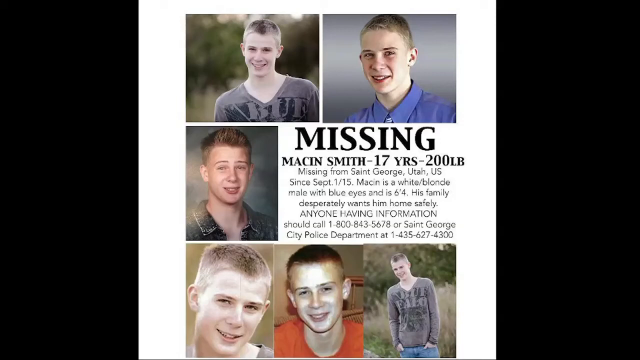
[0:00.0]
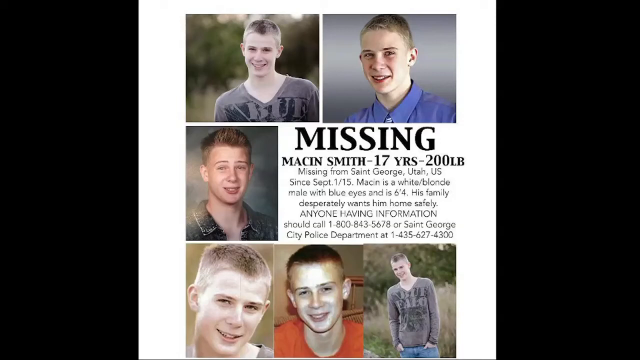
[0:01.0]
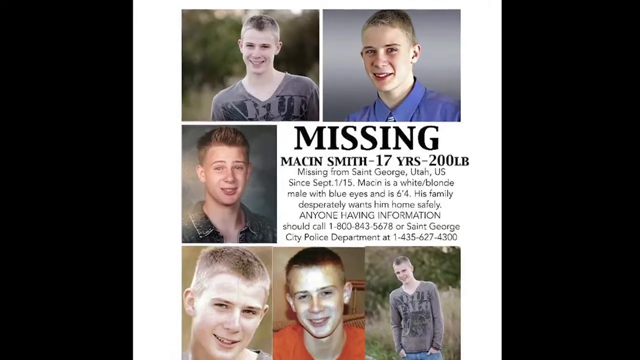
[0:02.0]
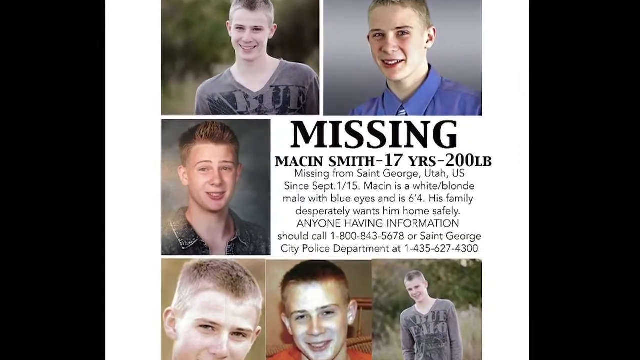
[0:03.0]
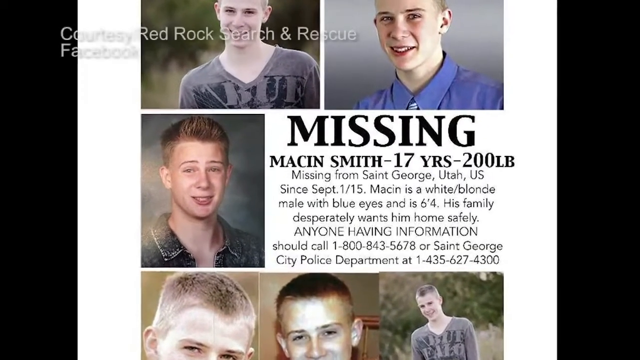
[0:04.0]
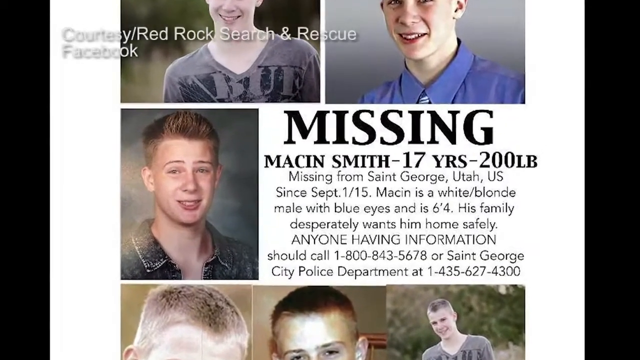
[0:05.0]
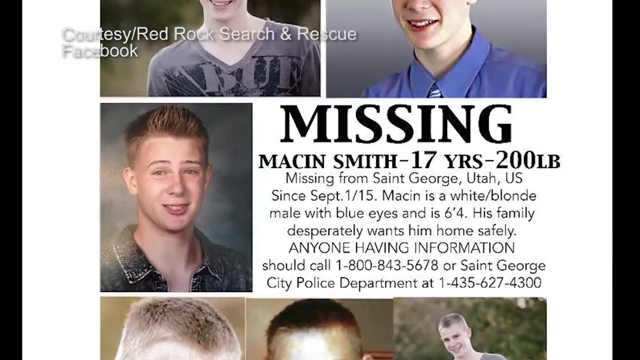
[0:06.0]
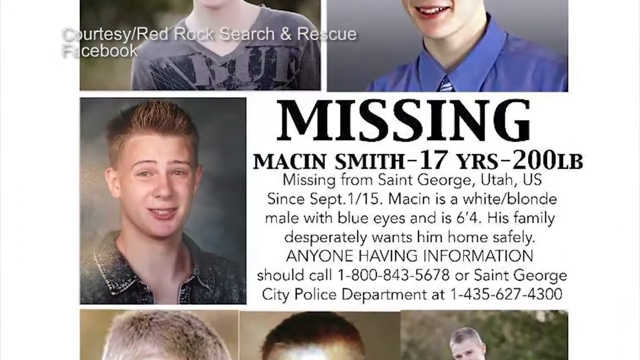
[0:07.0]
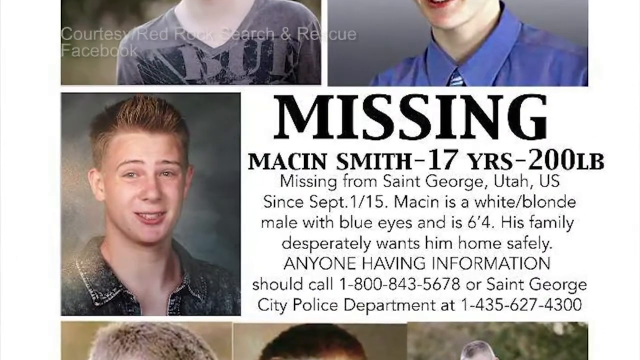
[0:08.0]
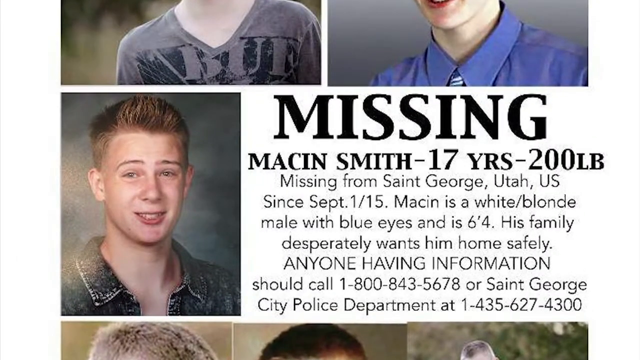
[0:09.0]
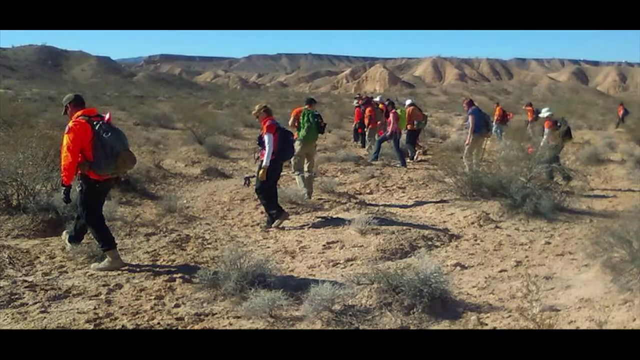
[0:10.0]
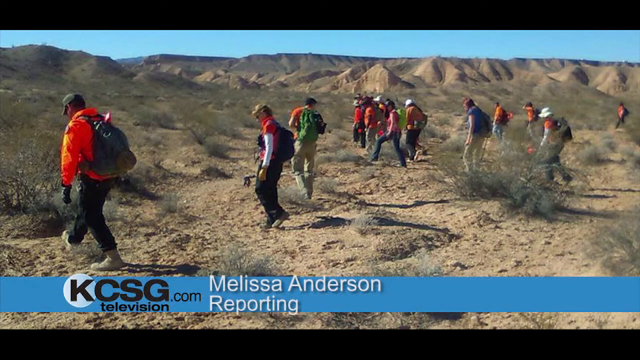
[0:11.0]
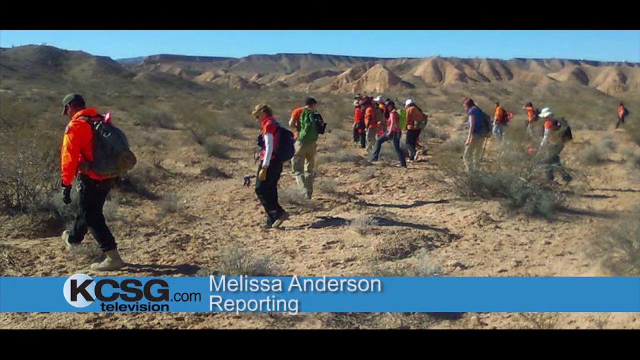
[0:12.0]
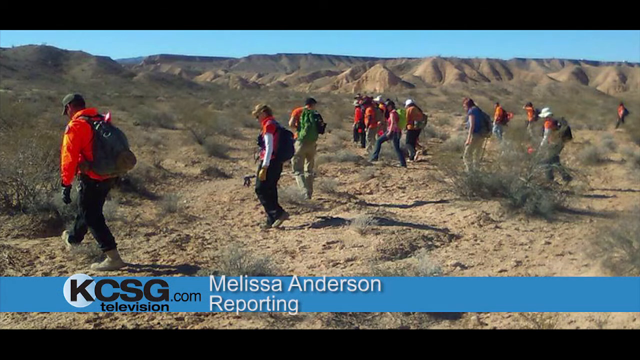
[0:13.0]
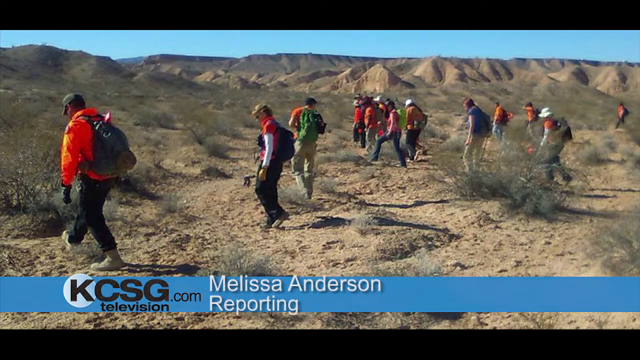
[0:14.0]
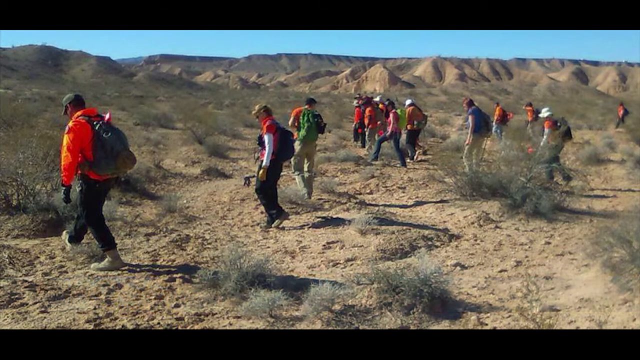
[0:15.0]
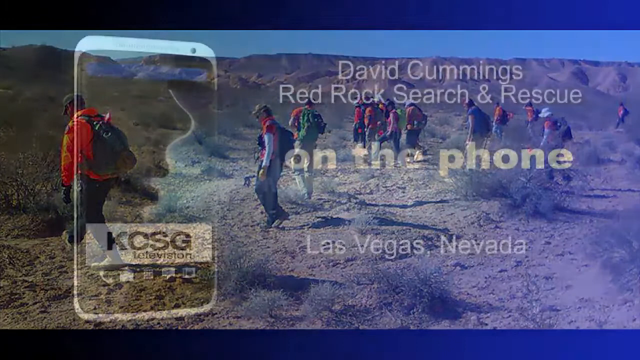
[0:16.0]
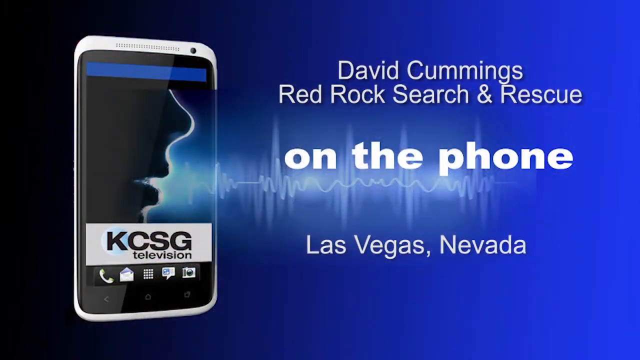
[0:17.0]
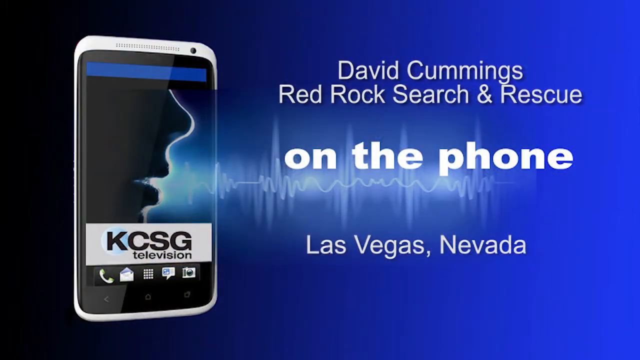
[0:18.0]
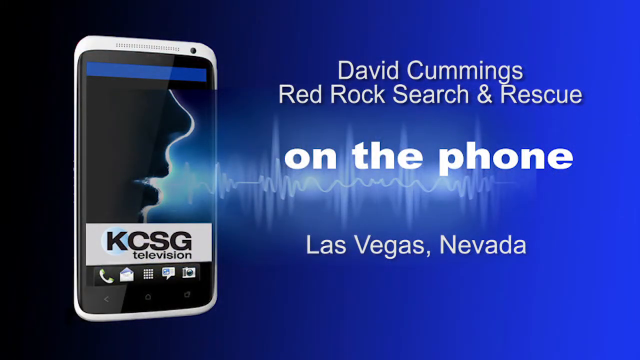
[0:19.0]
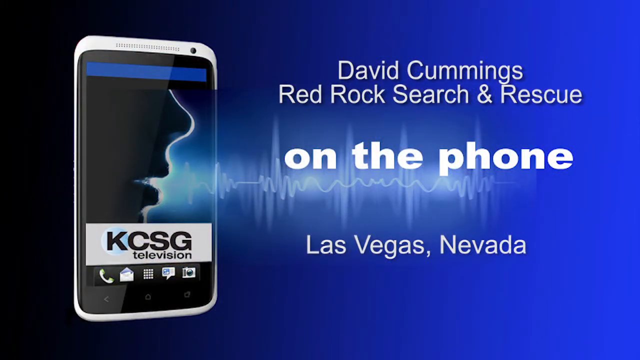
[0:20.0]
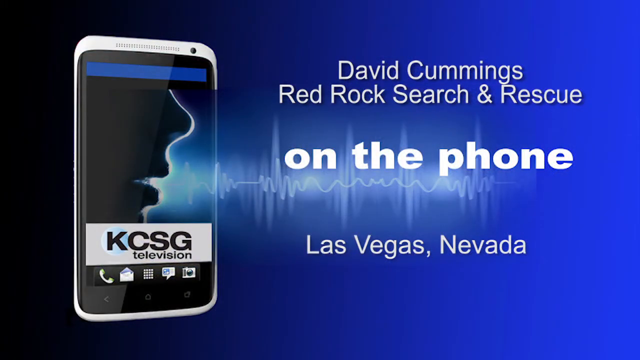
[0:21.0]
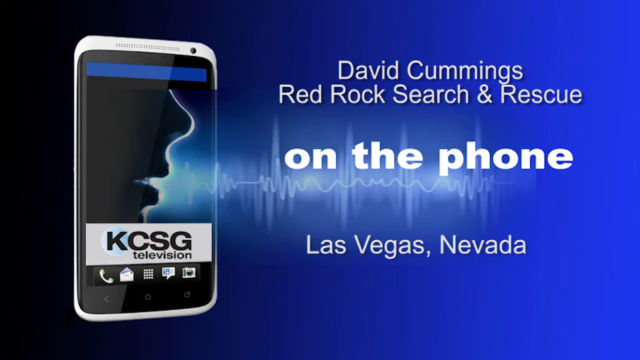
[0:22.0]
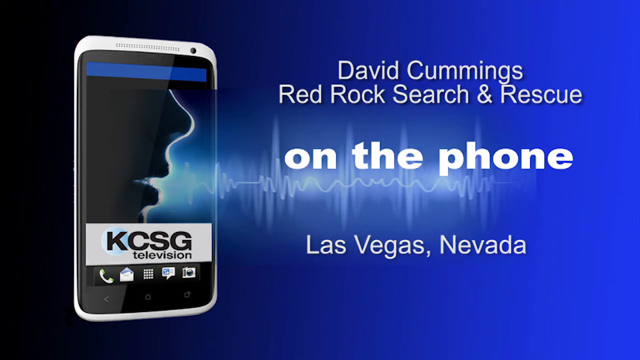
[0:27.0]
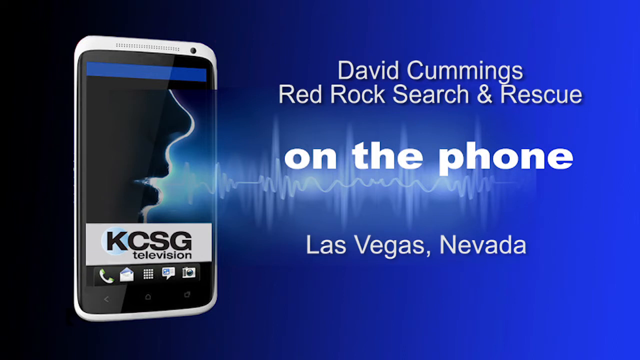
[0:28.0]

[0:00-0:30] The video opens on a missing poster for a 17-year-old, 200-pound boy. The document contains six pictures of him and states that he has been missing from St. George, Utah, in the U.S. since September 1, 2015. He is a white, blonde male with blue eyes who stands 6'4". The poster says his family wants him home safely and that anyone with information should call an 800 number or the St. George City Police Department. The camera zooms in on the text, which appears to be courtesy of Red Rock Search and Rescue. A news report from the station KCSG, with the website kcsg.com, follows; a call-out at the bottom of the screen names the reporter as Melissa Anderson. The report shows about 14 people searching across Red Rocks on very rough-looking, inhospitable terrain with some scrub brush and not much water. The hikers carry backpacks and are dressed in layers. On-screen text then reads "David Cummings of Red Rock Search and Rescue is on the phone from Las Vegas, Nevada."